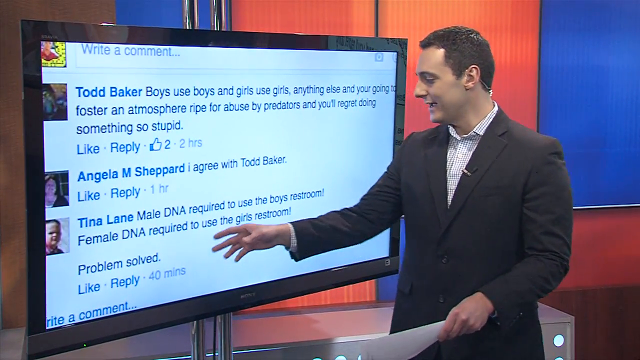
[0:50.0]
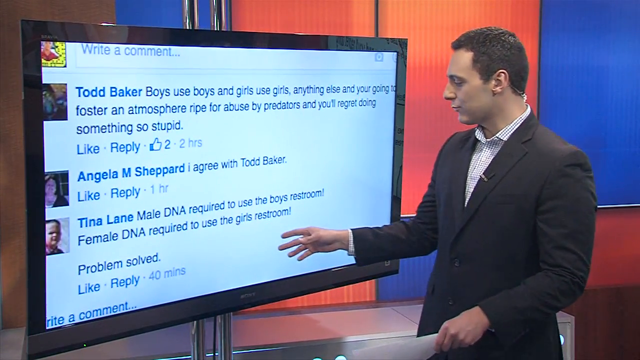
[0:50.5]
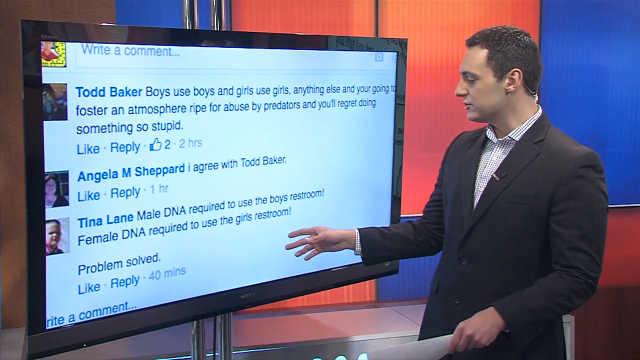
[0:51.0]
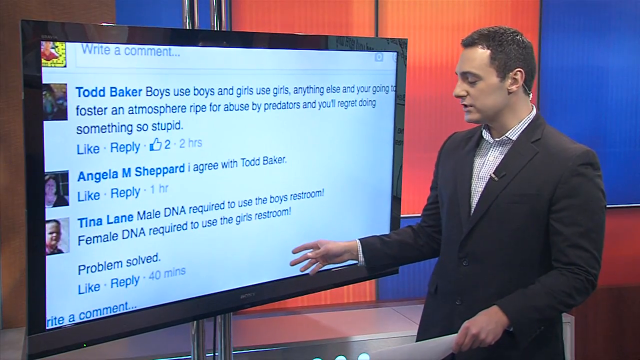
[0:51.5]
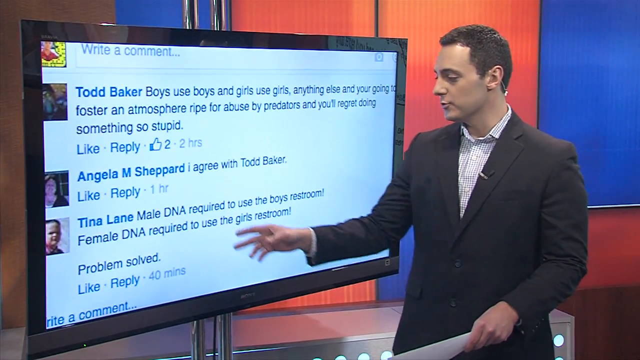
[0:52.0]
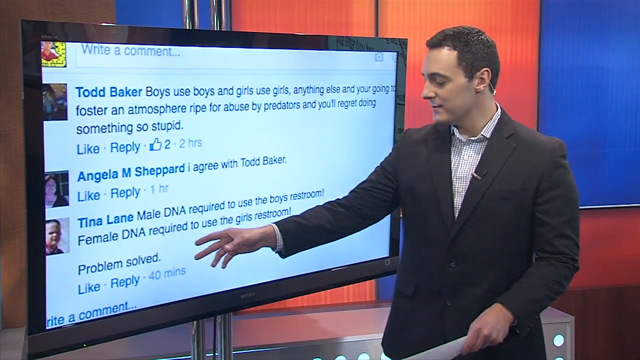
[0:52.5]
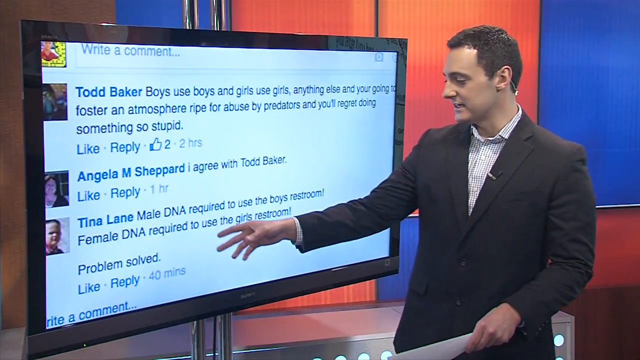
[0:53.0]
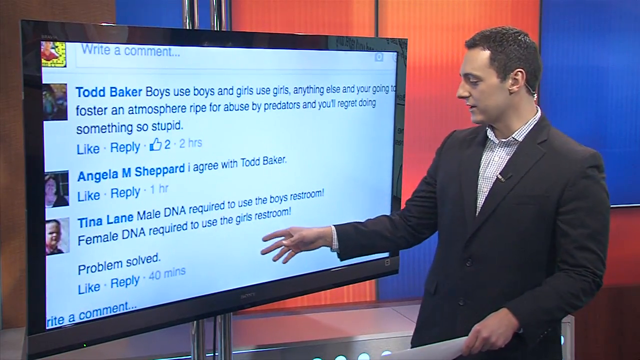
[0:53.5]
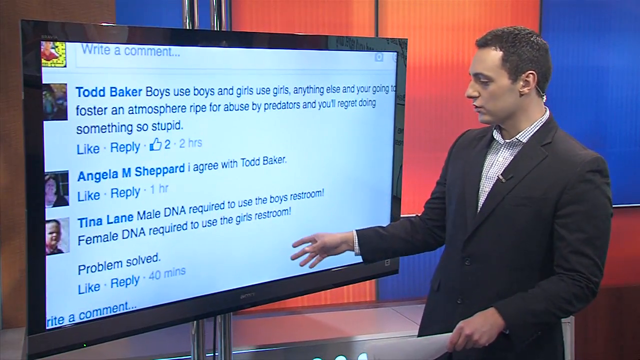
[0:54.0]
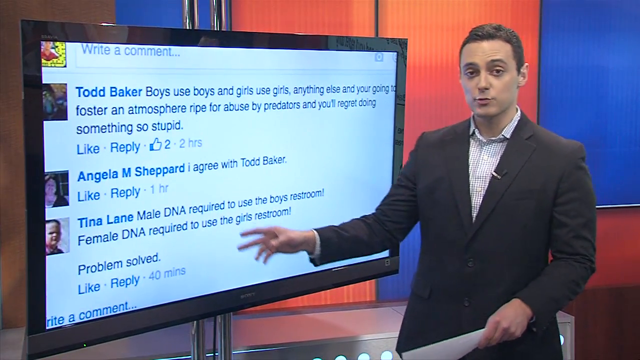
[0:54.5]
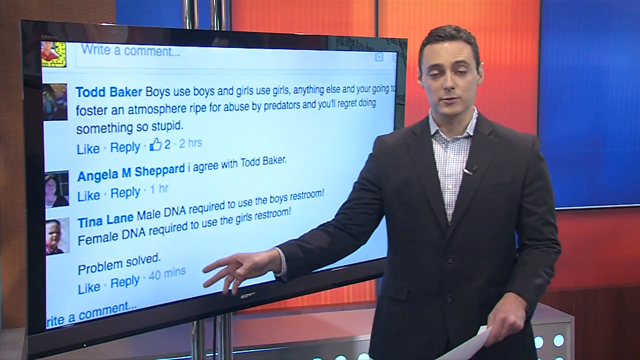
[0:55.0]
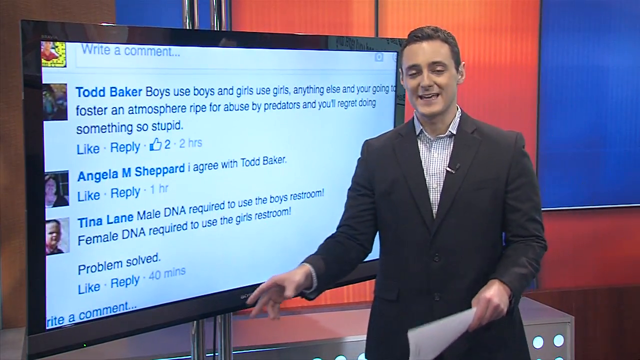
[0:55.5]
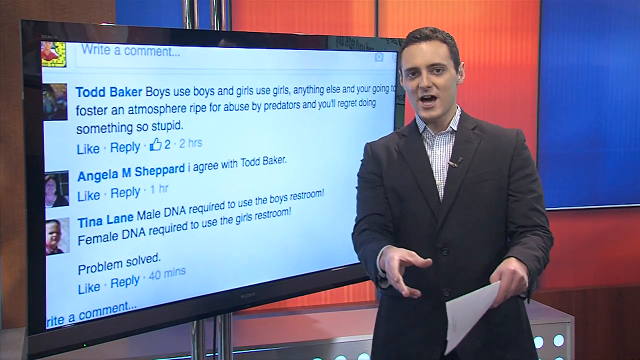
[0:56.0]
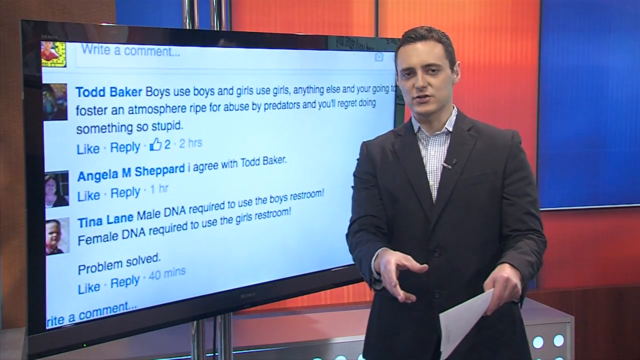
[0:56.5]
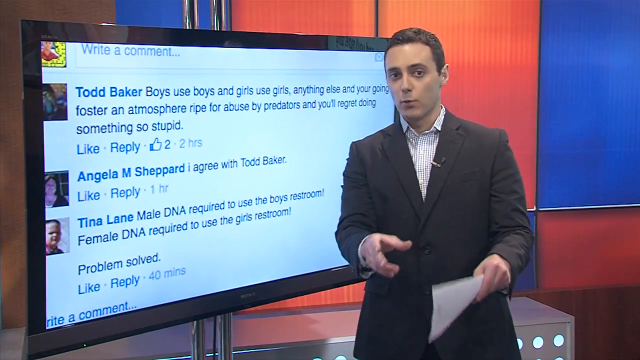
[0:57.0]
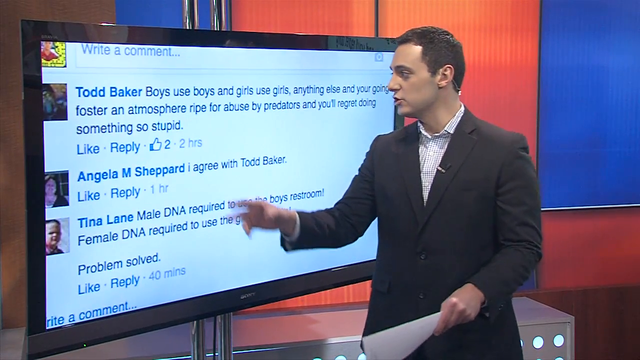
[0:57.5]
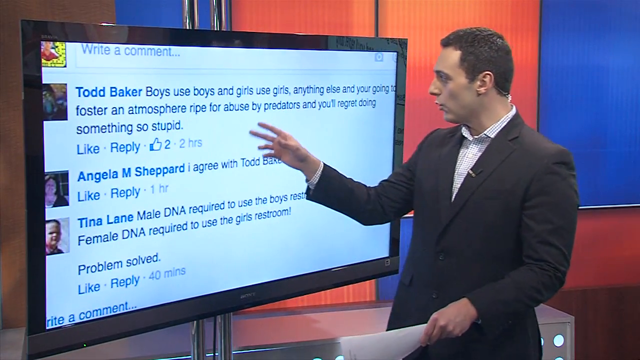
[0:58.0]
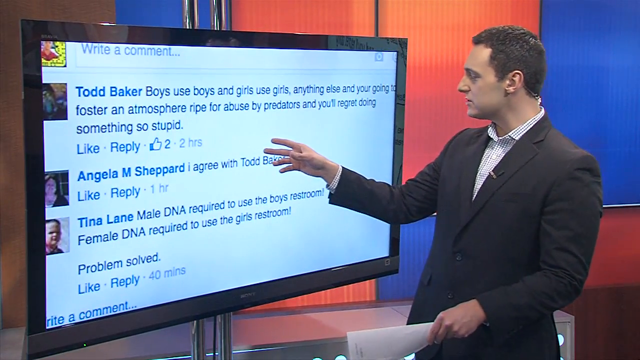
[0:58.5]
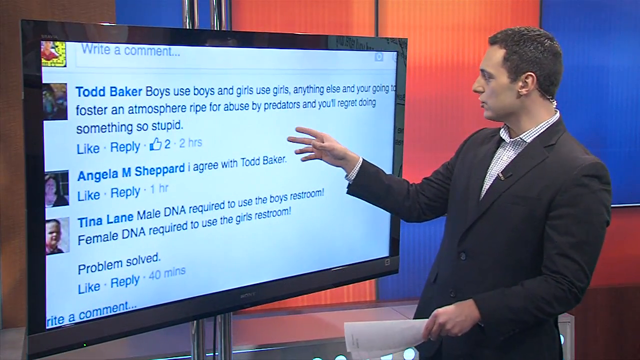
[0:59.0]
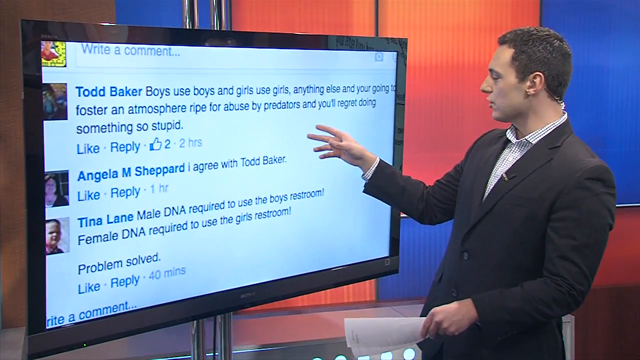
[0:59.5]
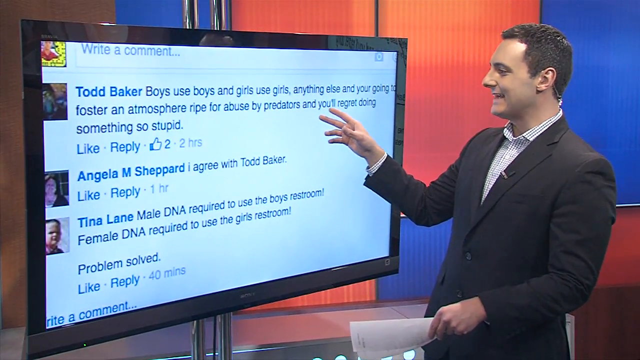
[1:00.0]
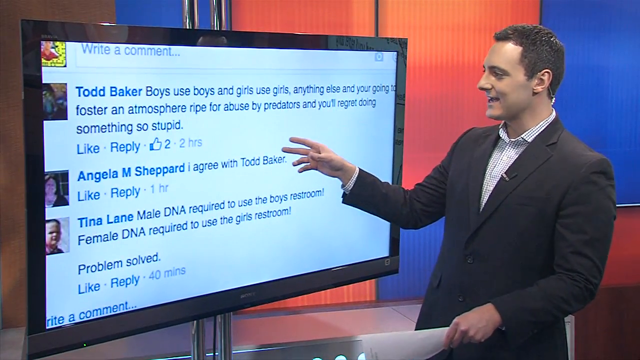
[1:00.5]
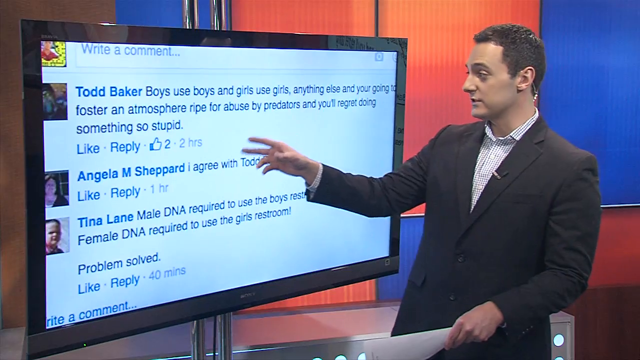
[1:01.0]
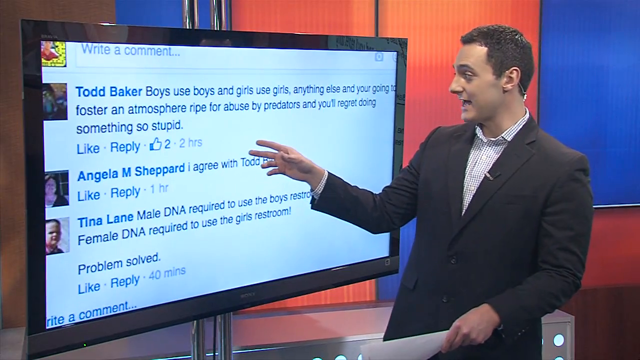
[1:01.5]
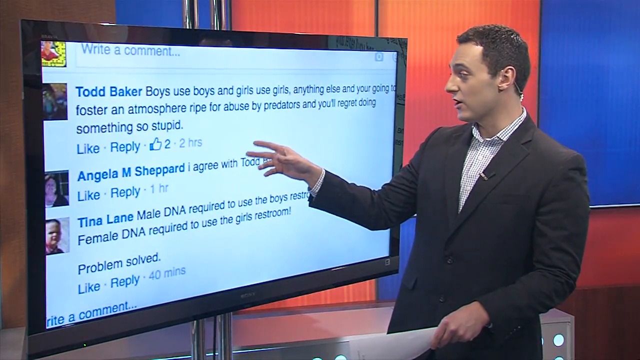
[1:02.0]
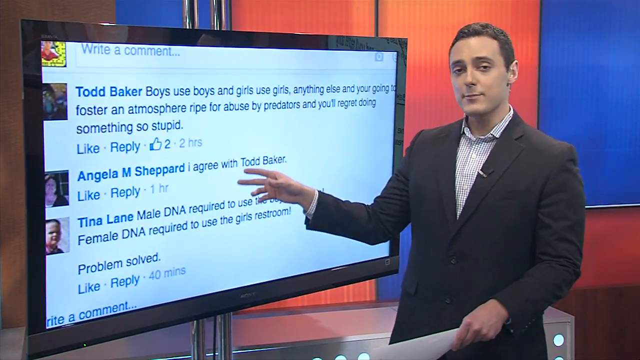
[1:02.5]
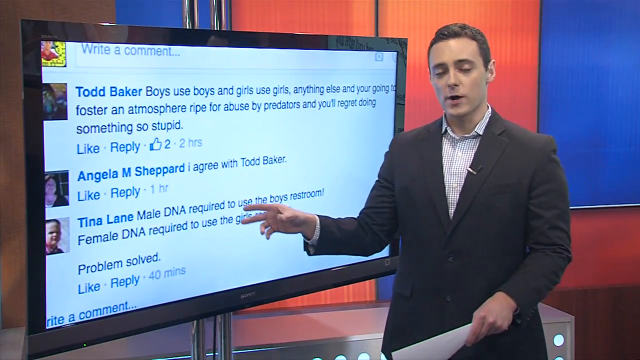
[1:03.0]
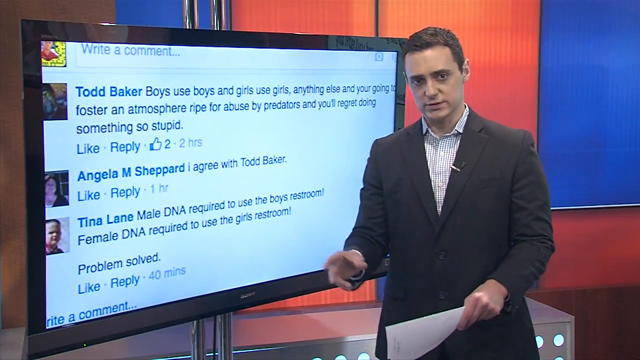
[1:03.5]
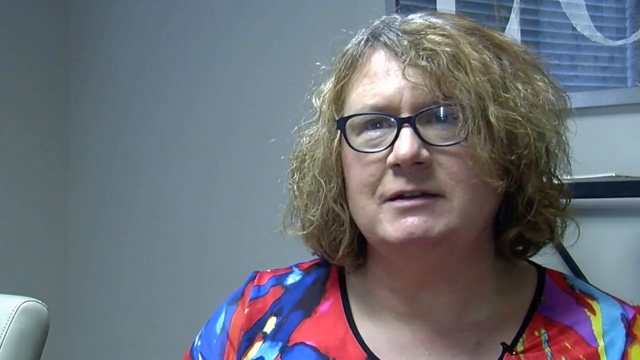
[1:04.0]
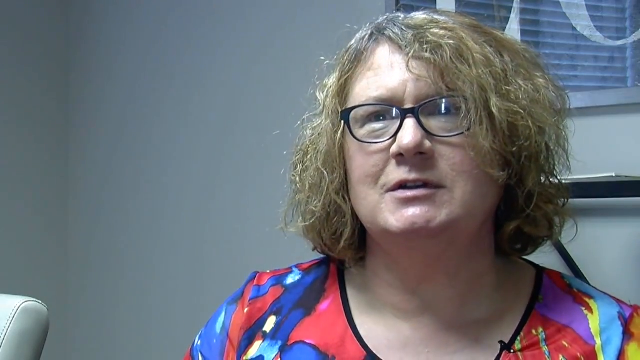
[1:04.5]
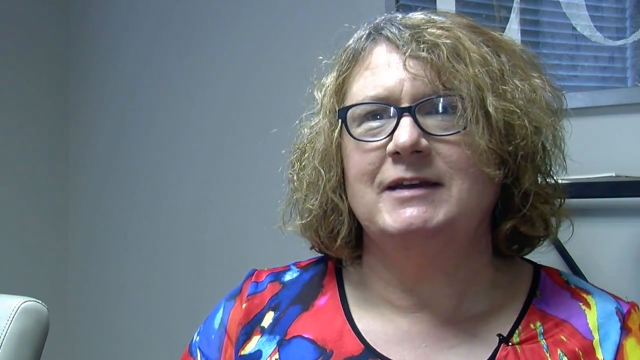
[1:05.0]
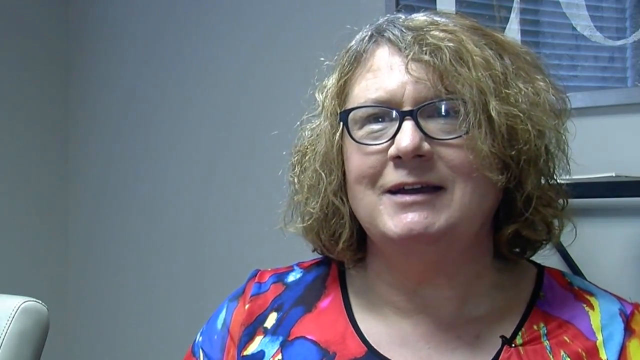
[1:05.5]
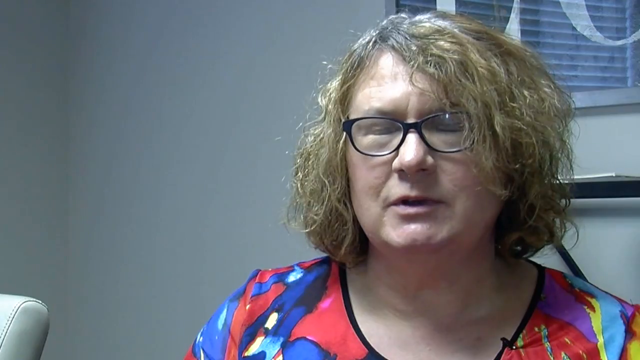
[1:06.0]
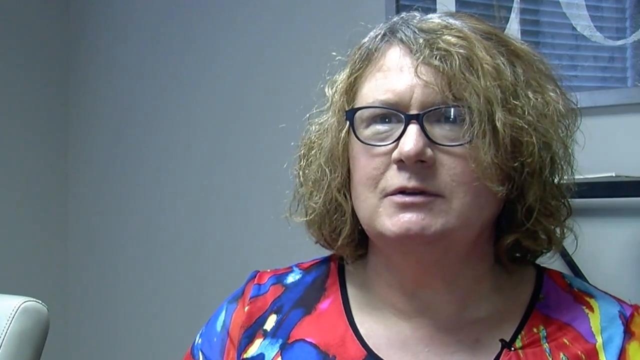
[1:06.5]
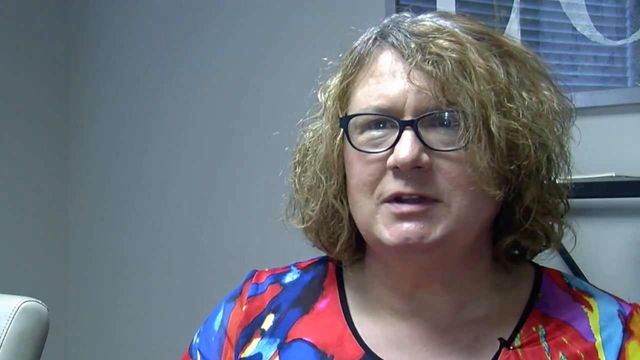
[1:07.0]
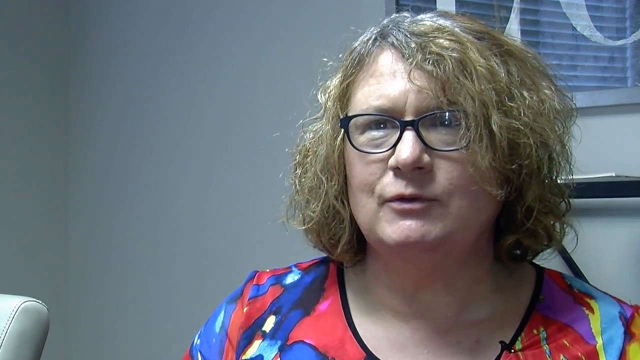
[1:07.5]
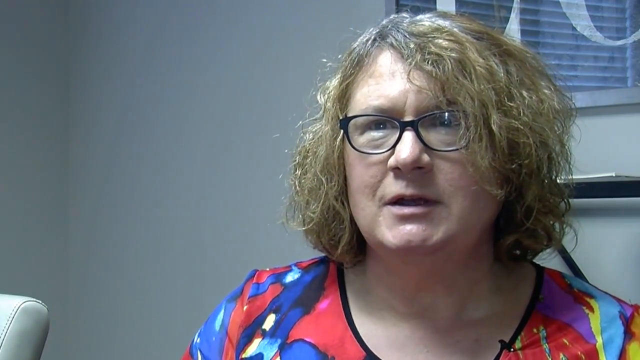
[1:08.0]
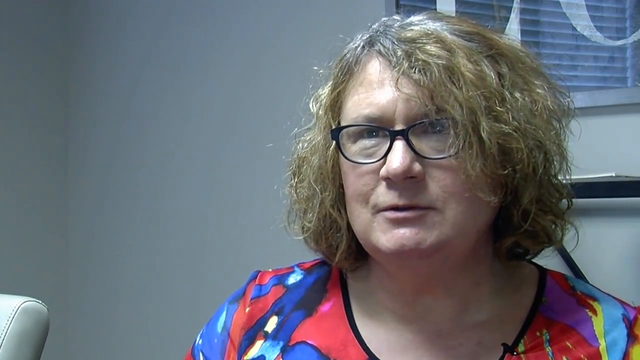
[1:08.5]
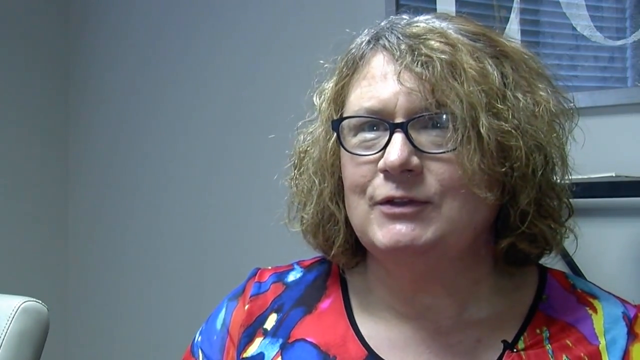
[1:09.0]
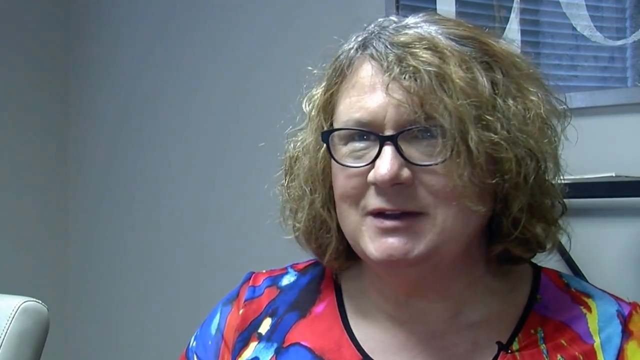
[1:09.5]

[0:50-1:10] The newscaster kind of points to the screen. He points to Tina Lane's Facebook comment and looks at it while reading it out or talking about it, then points to the middle comment by Angela M. Shepherd, talks about it, and looks back to the camera. The video cuts back to the woman with short blonde hair with gray roots, wearing glasses and the multicolored red, blue and yellow shirt. She sits in a gray-walled room talking to the camera, with a blue framed picture behind her and a light-colored leather chair to her left, cropped out of the frame. She has a microphone attached to the neckline of her shirt, which is black. She looks to the person sitting across from her off camera, then to the ground, and nods as she speaks.